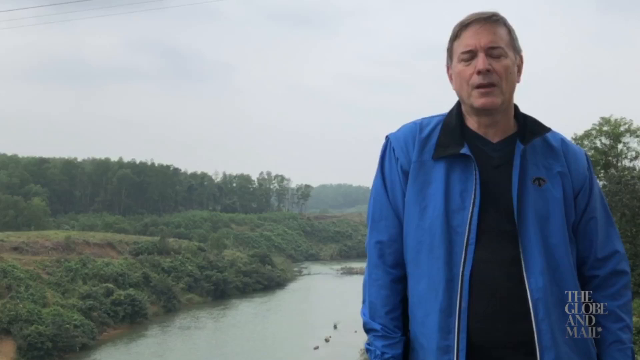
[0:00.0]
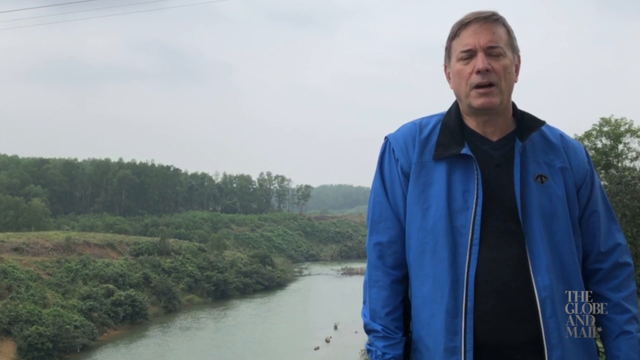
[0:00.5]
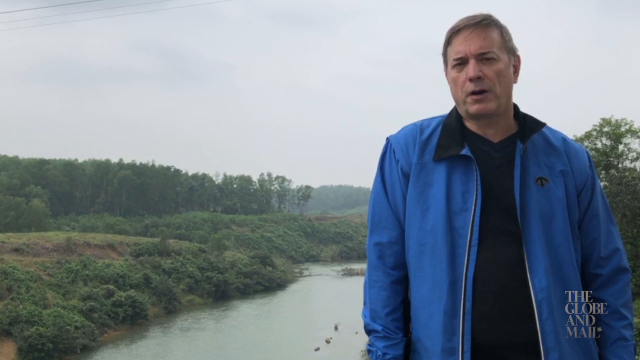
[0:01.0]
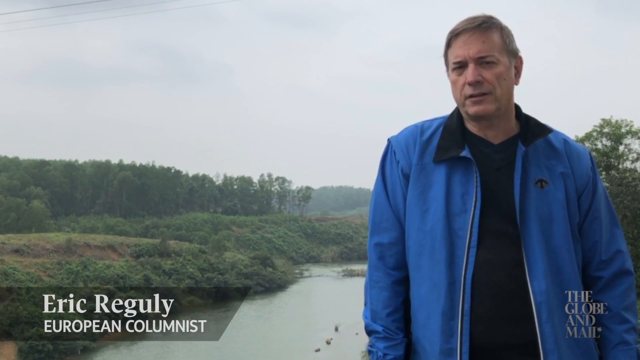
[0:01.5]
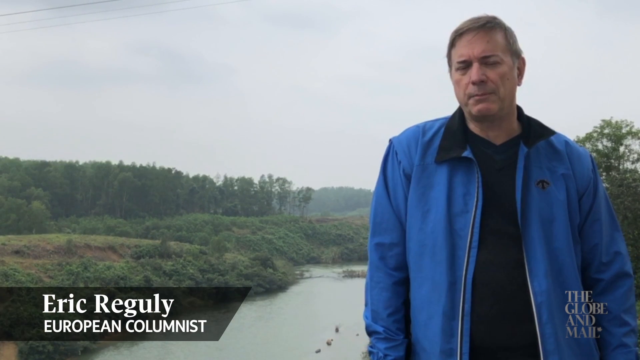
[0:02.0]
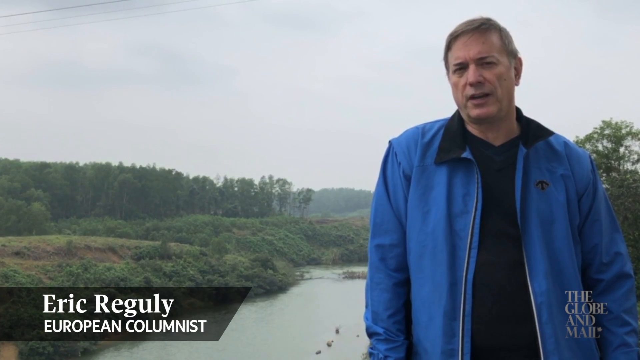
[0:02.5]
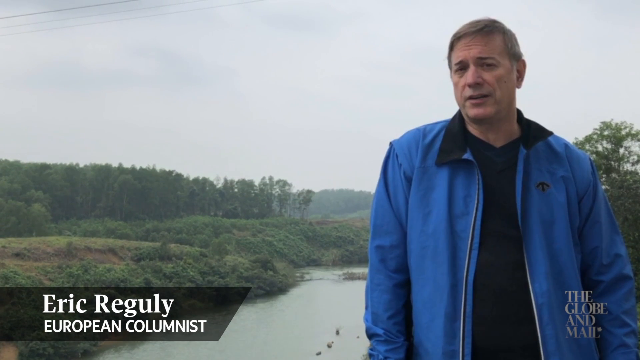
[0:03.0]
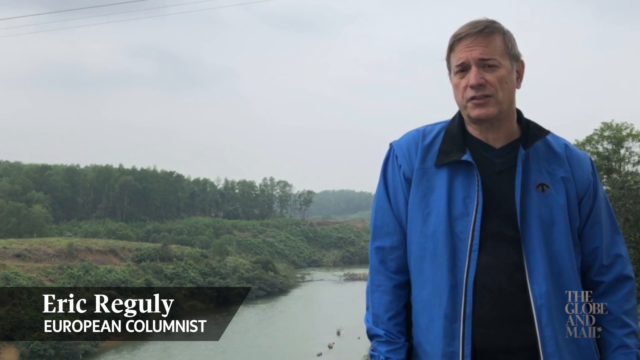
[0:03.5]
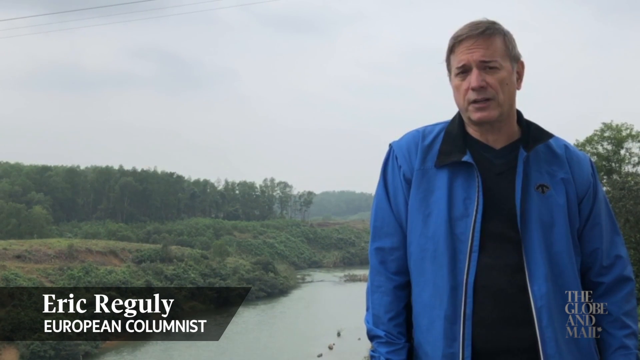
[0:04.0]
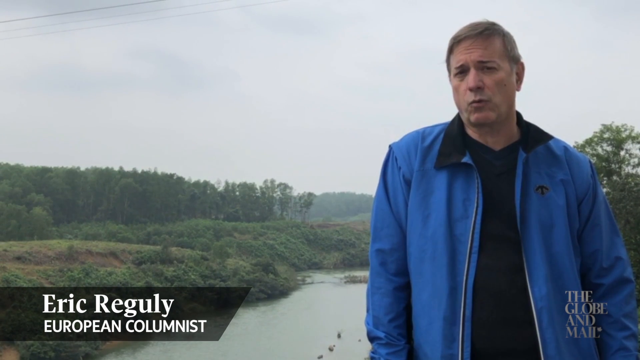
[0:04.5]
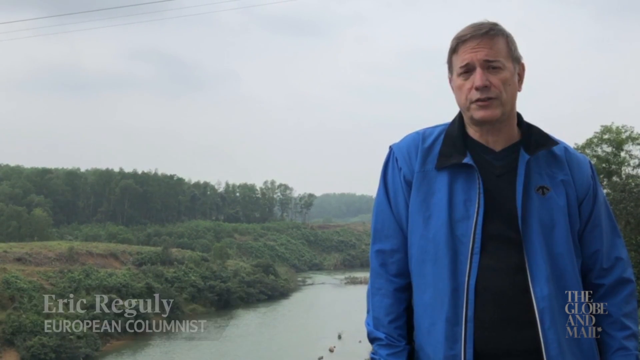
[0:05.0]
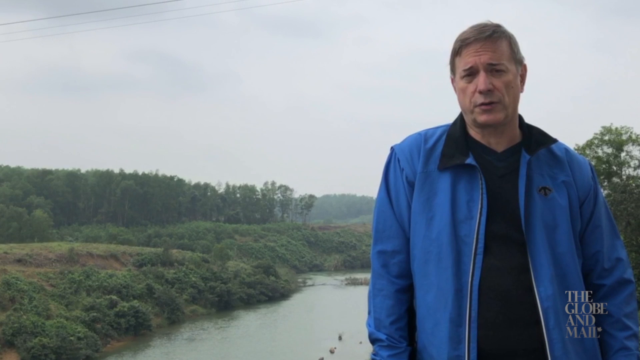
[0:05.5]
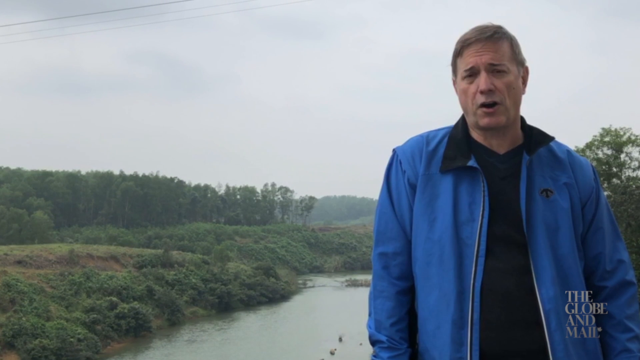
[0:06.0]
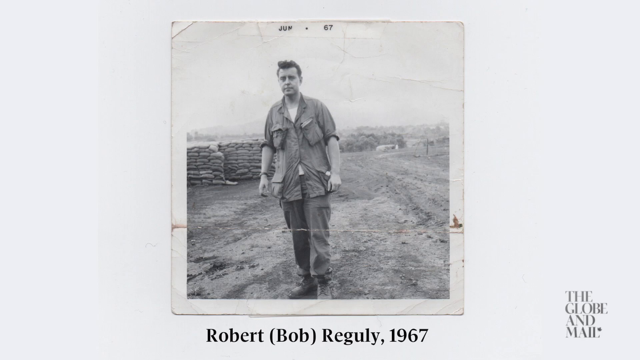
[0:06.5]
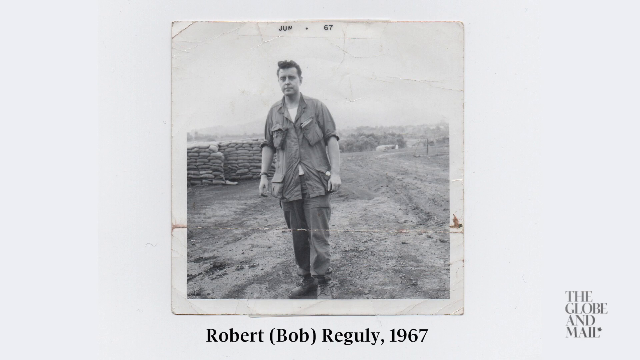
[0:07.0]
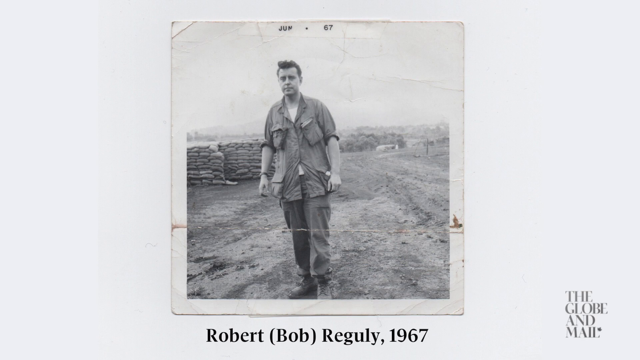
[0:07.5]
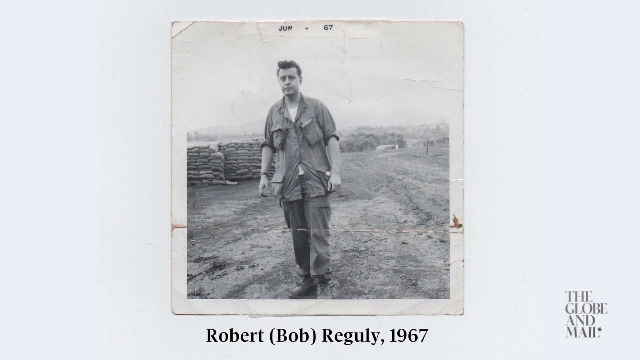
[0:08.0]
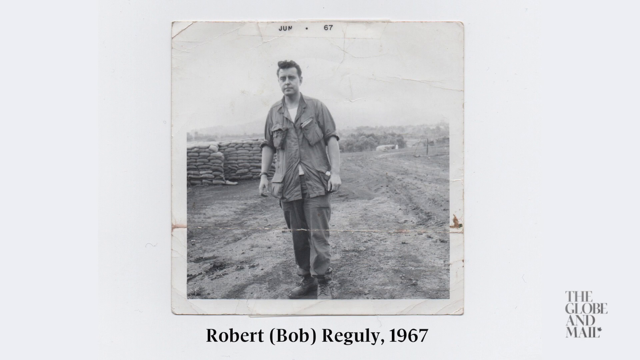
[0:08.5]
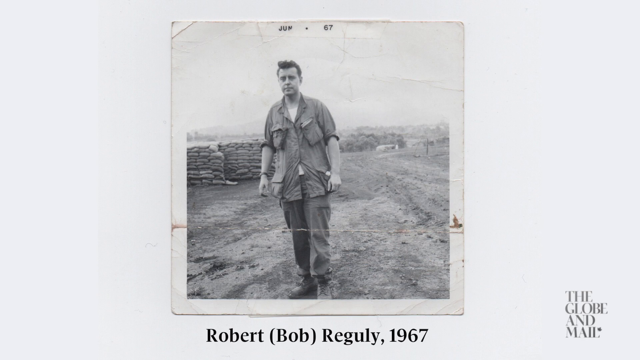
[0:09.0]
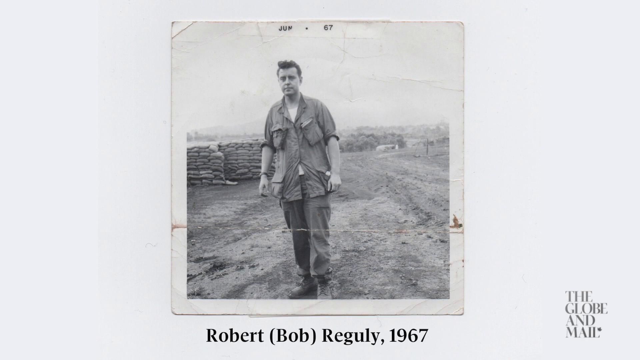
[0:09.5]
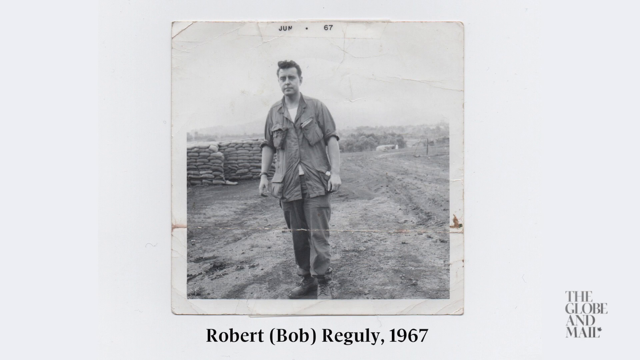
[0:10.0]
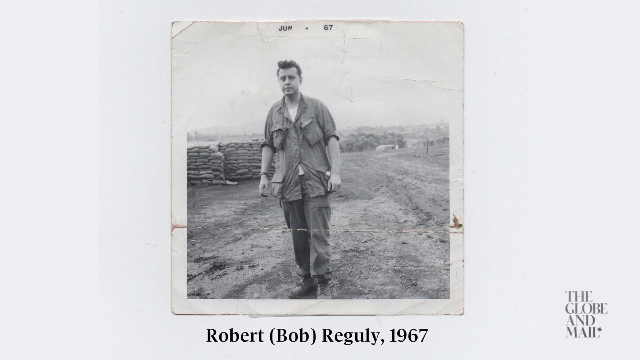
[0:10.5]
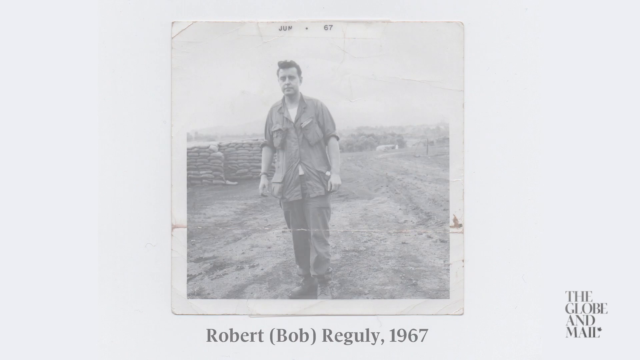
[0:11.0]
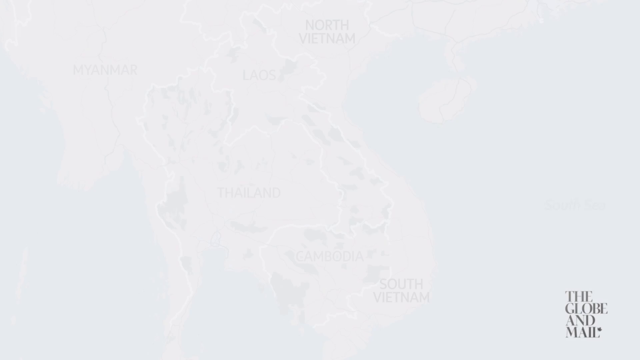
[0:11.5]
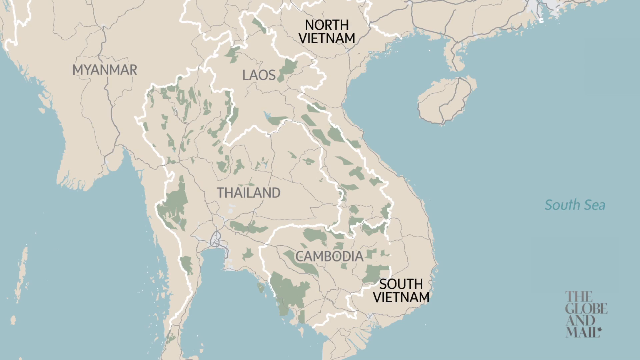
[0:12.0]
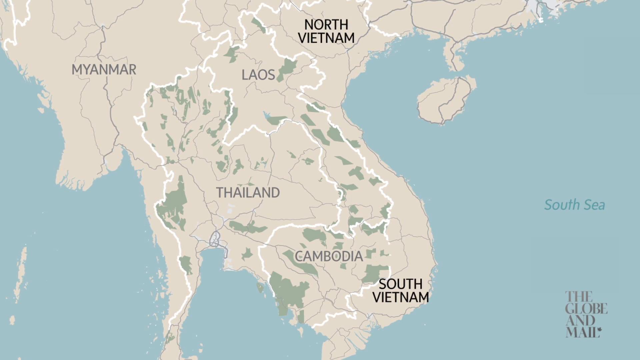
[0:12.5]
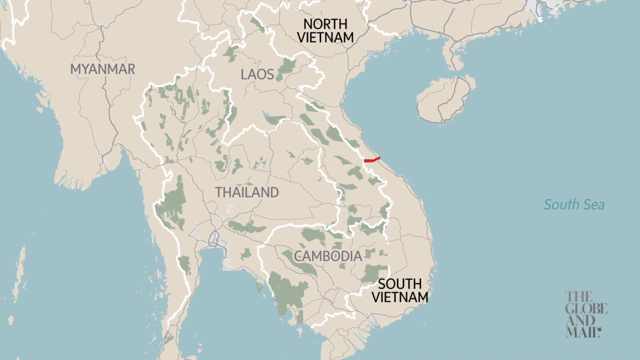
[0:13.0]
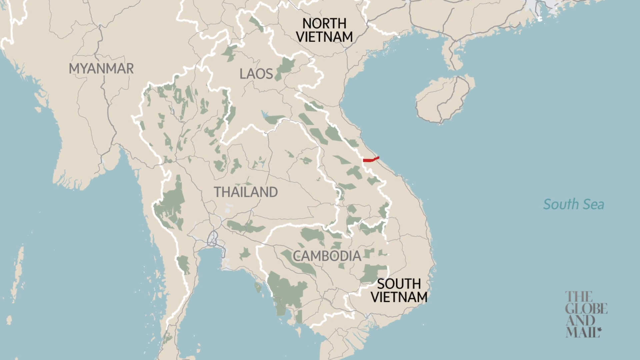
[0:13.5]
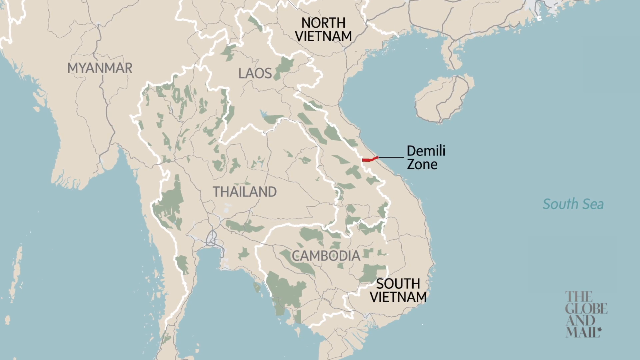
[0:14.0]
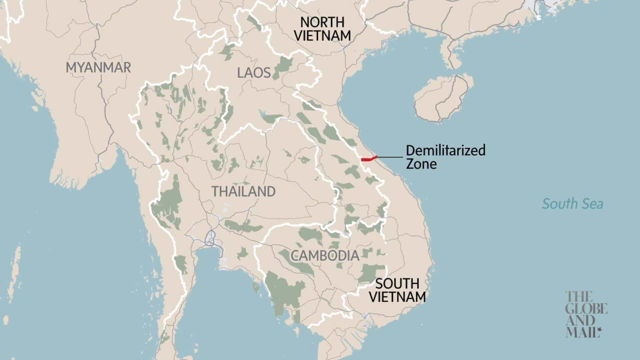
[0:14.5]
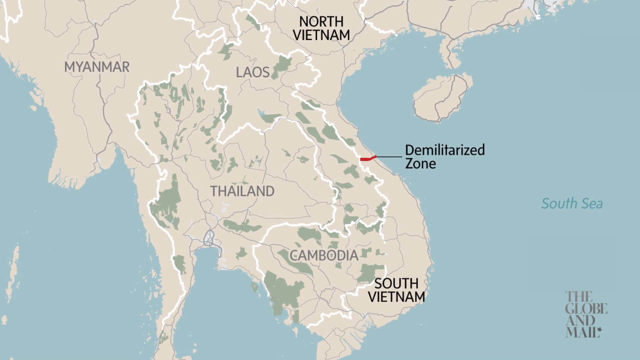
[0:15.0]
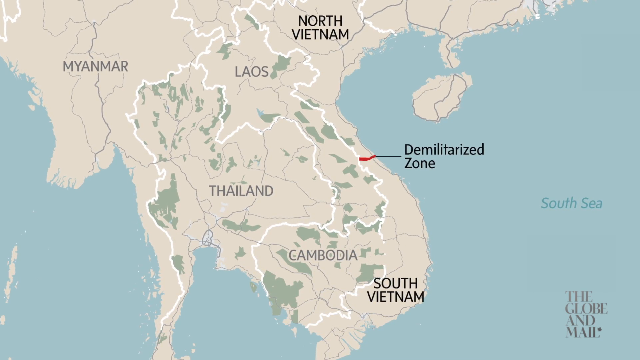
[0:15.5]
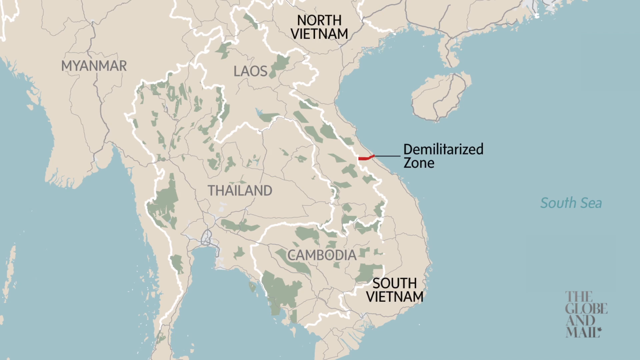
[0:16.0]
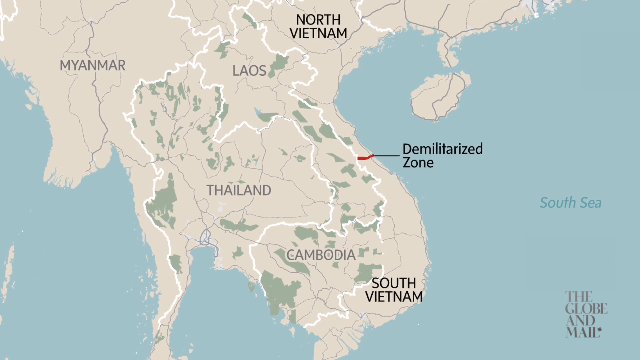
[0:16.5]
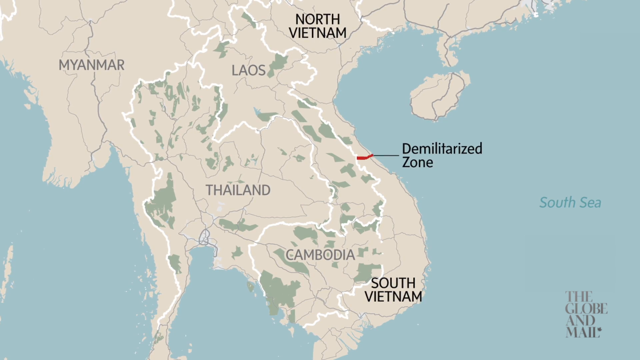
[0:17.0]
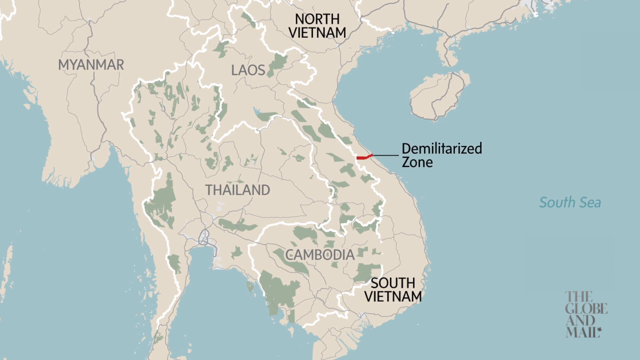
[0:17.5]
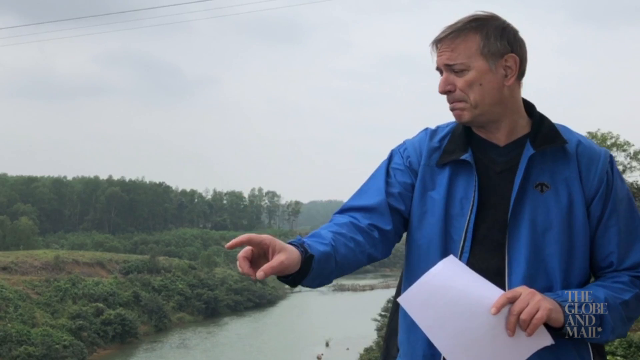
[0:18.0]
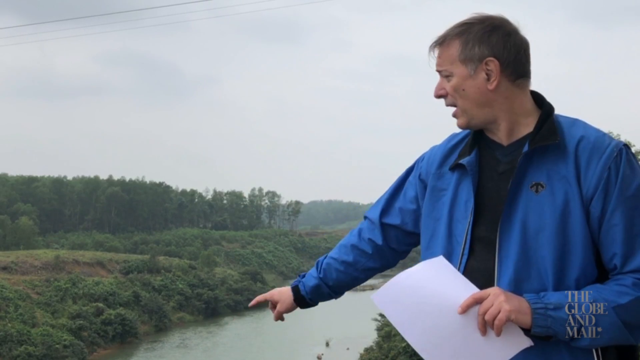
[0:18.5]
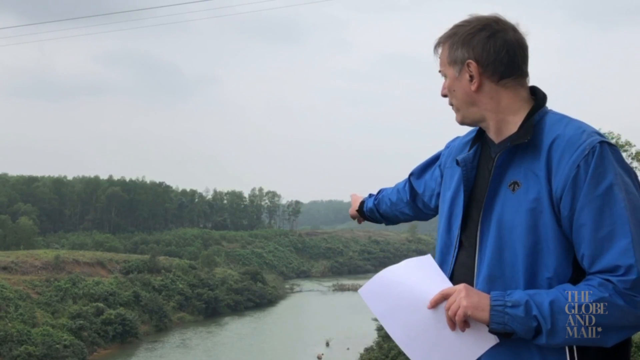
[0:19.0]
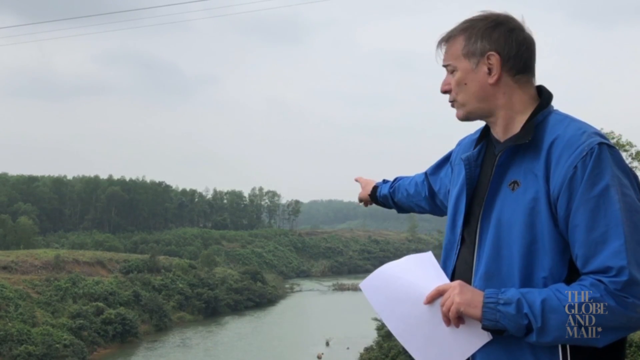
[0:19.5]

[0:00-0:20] A man stands on the right of the shot, with a river and a grassy bank behind him and a large amount of trees on the left. He wears an open blue jacket with a navy collar over a black V-neck T-shirt. In the bottom left corner of the screen the name "Eric Reguly" appears with "European Columnist" underneath, and in the bottom right corner it says "The Globe and Mail". The text disappears and the man talks to camera. The video then shows a very old black-and-white photograph of a muddy area with lots of sandbags piled up in the background. In the foreground is a man in military clothes, standing in a natural pose and looking towards the camera as his photo is taken. Underneath the photo it reads "Robert, (Bob) Reguly, 1967". Next comes a simple map showing Thailand, Cambodia, South Vietnam and the South Sea. Text with a pointer pops up reading "demilitarized zone"; the pointer is part way down the map, roughly halfway down the edge of Laos, near the South Sea. The video returns to the man, who talks to camera while pointing his left arm down the river behind him, holding some white papers in his left hand.